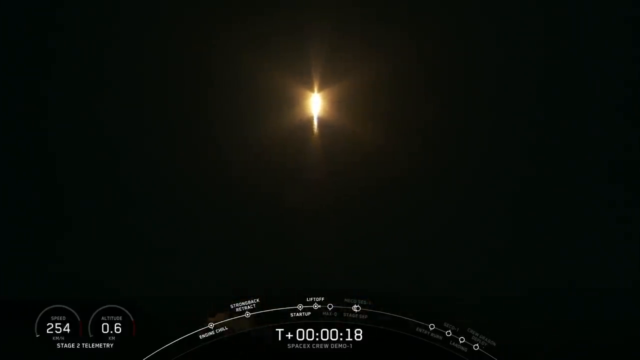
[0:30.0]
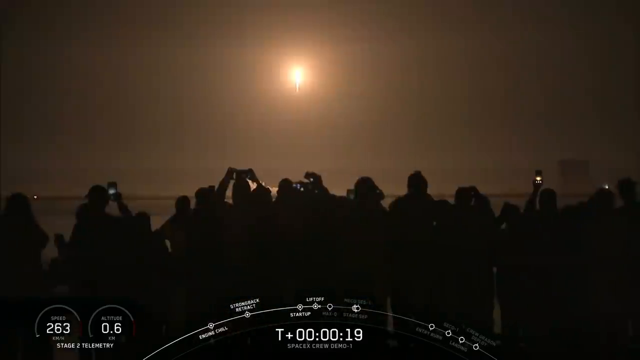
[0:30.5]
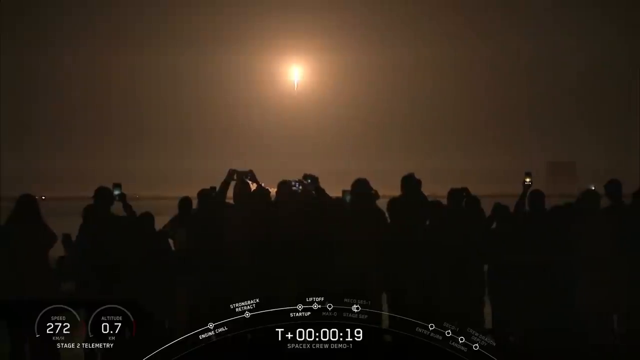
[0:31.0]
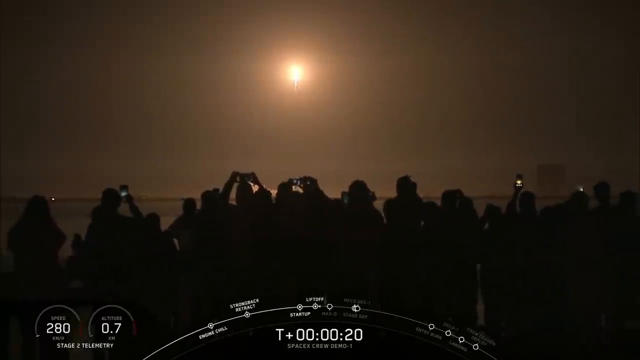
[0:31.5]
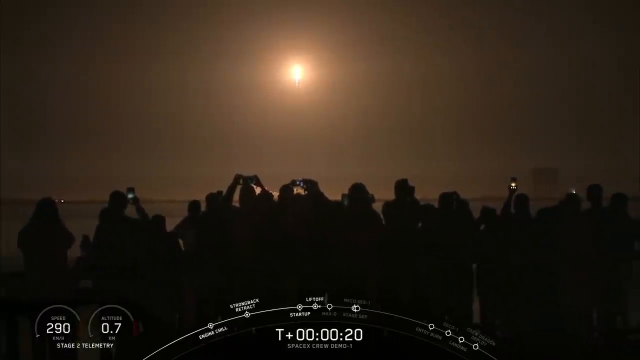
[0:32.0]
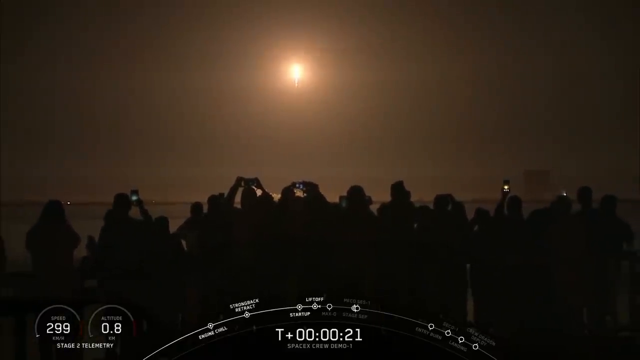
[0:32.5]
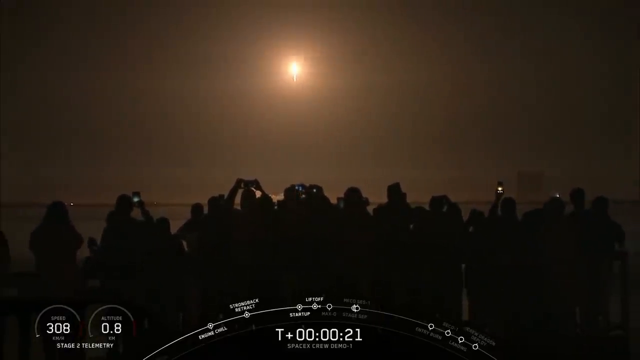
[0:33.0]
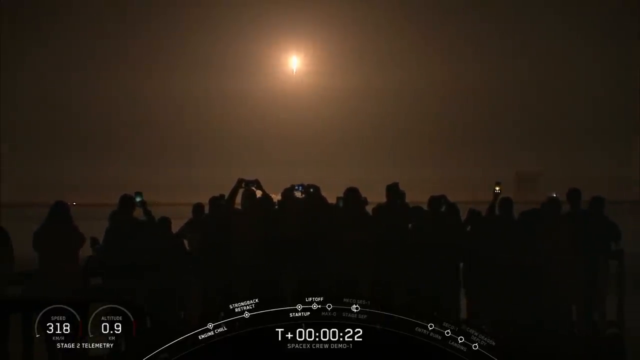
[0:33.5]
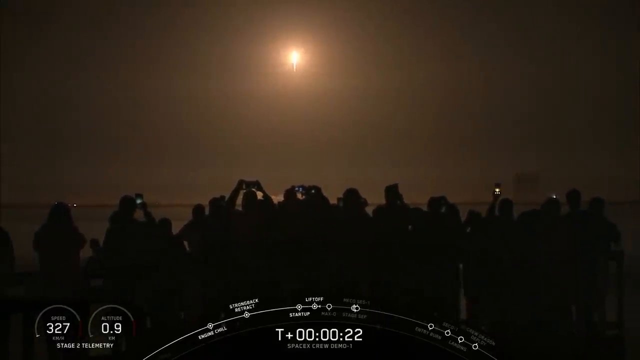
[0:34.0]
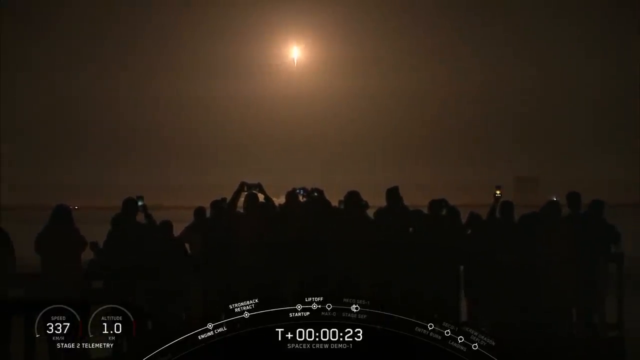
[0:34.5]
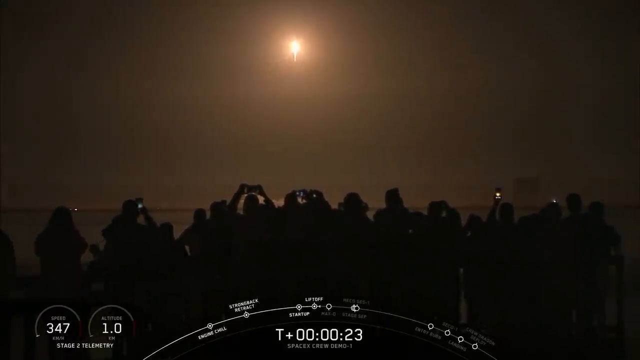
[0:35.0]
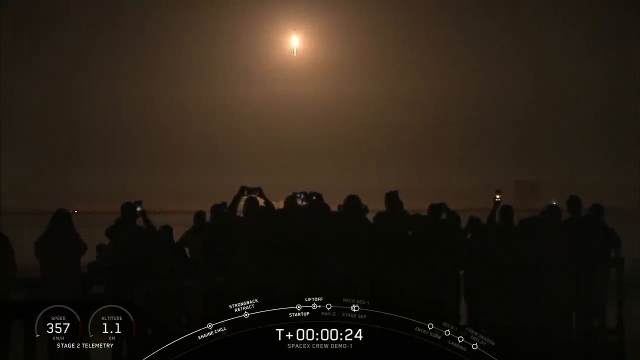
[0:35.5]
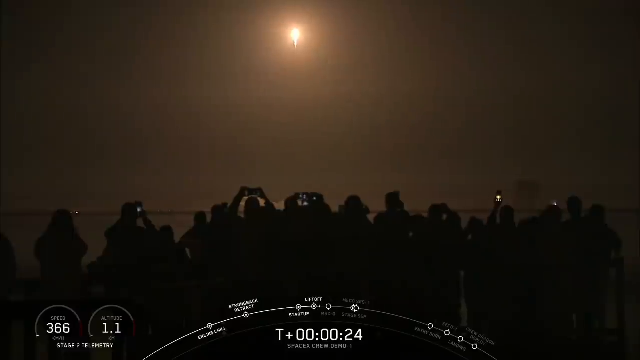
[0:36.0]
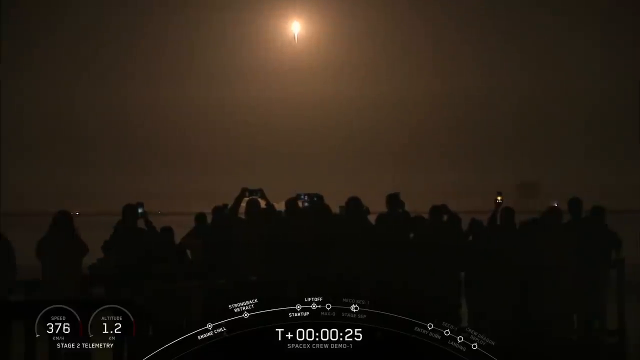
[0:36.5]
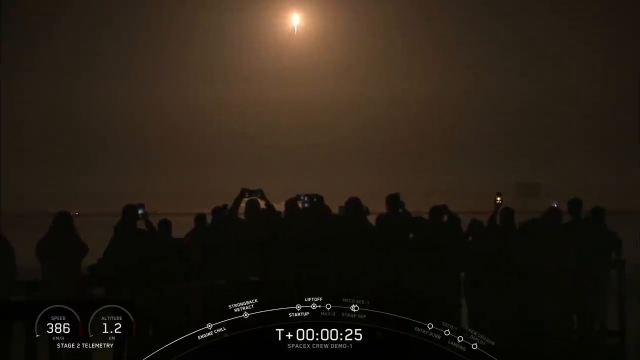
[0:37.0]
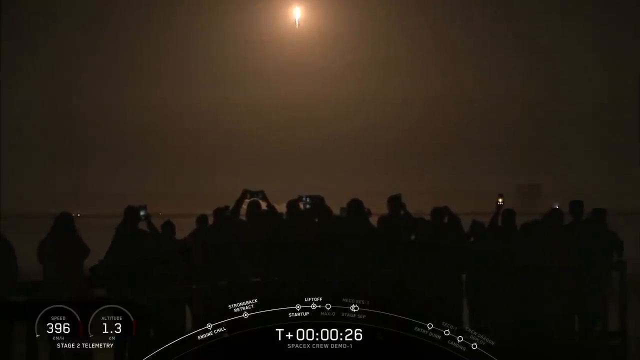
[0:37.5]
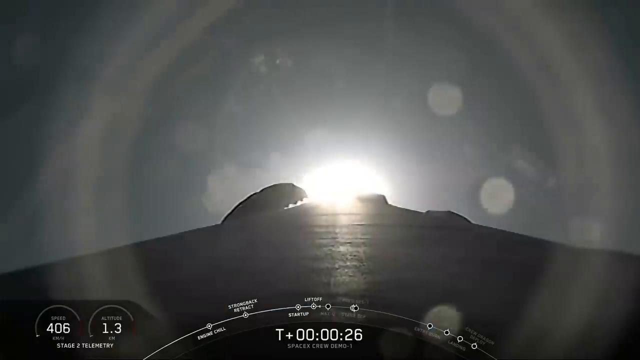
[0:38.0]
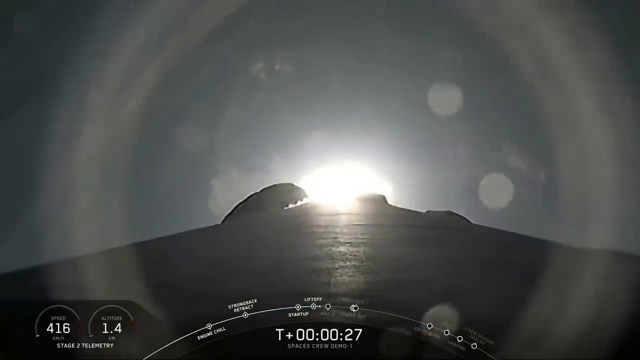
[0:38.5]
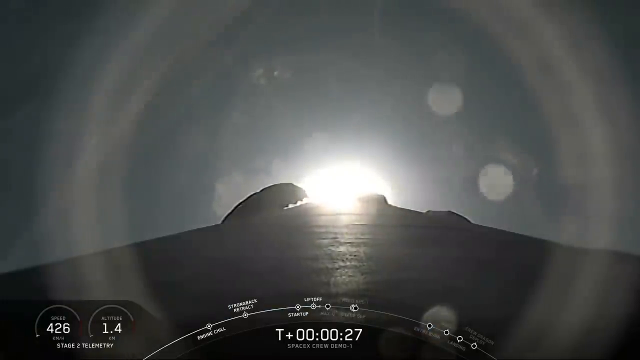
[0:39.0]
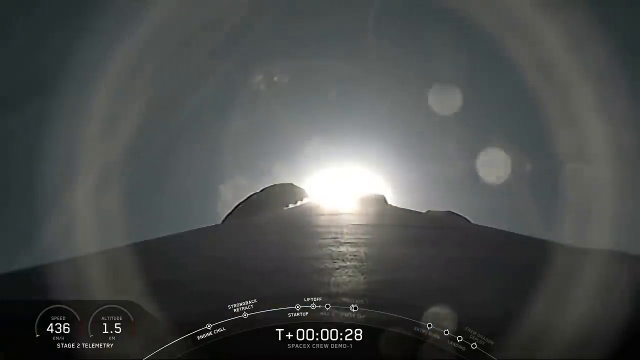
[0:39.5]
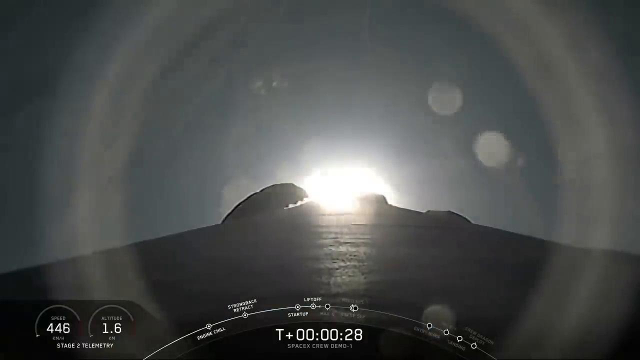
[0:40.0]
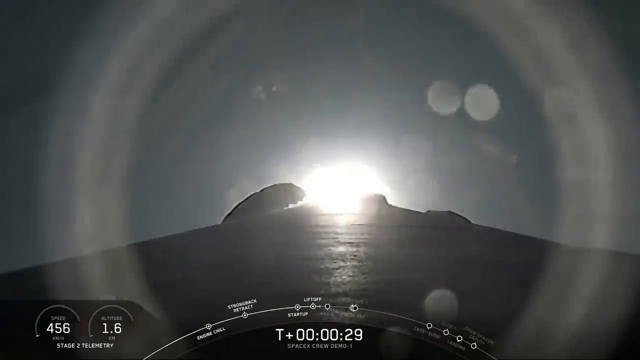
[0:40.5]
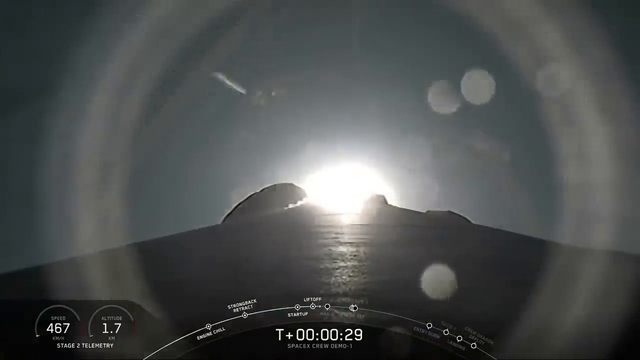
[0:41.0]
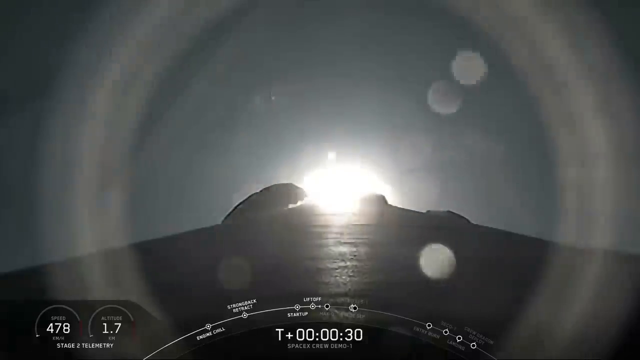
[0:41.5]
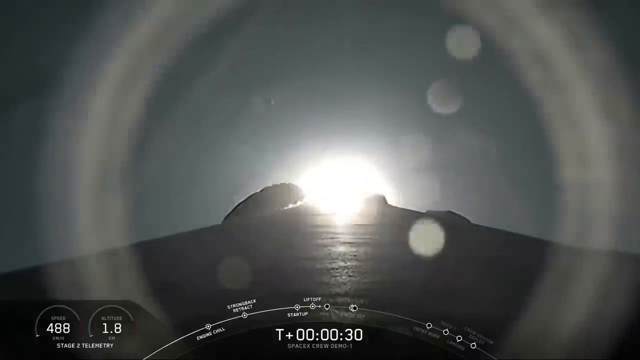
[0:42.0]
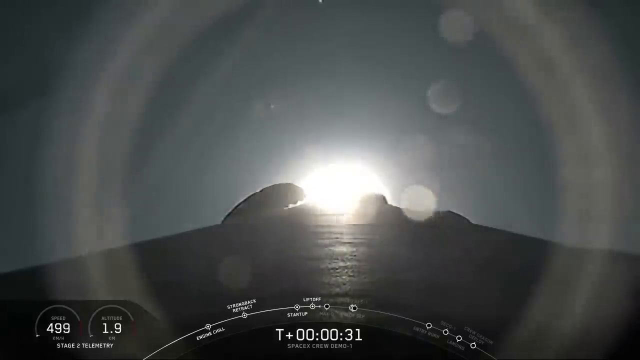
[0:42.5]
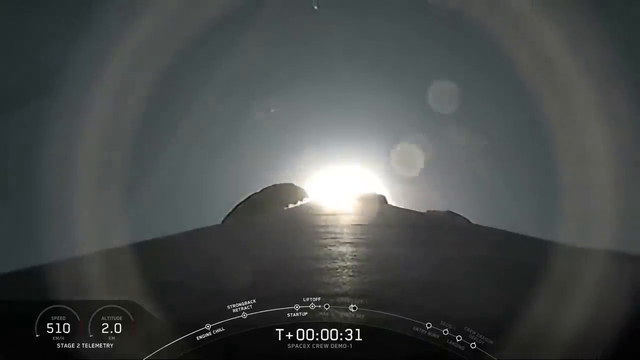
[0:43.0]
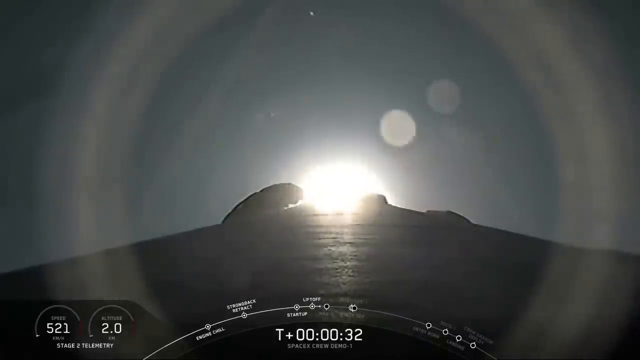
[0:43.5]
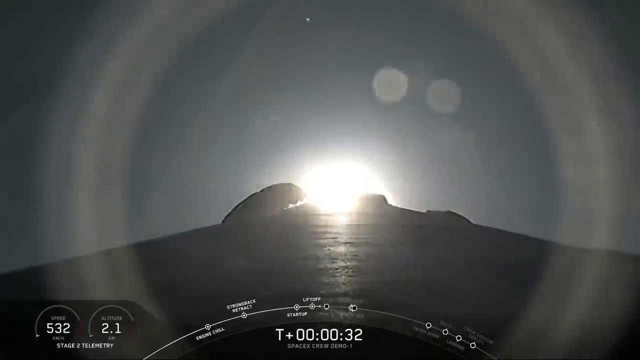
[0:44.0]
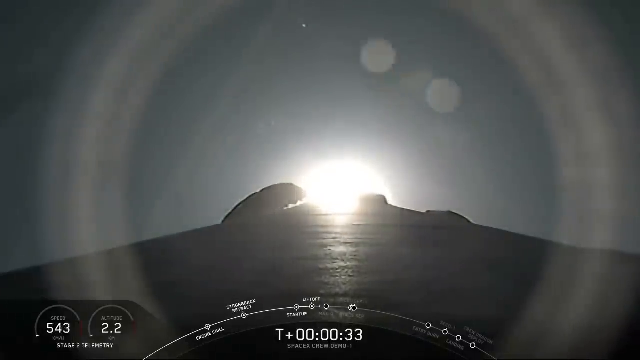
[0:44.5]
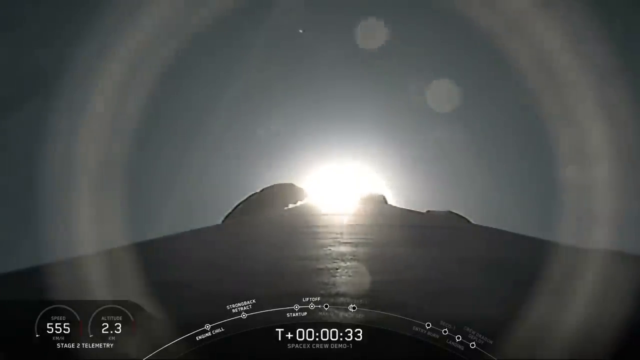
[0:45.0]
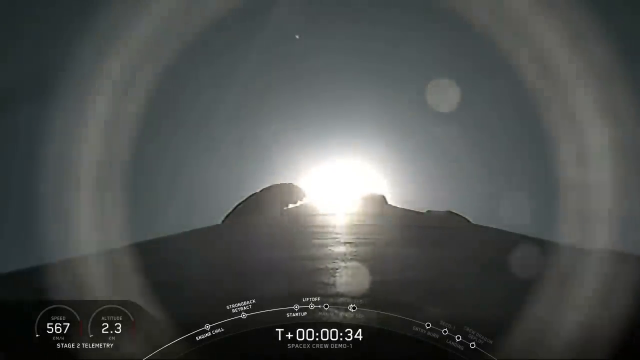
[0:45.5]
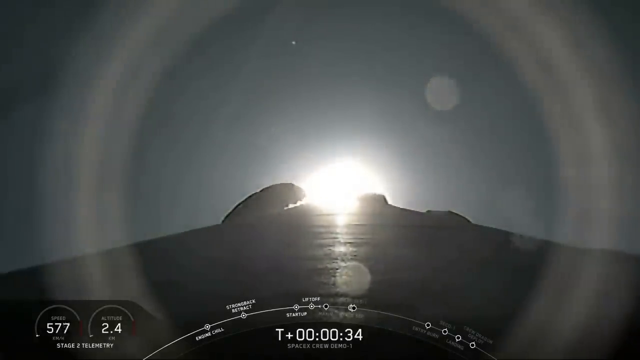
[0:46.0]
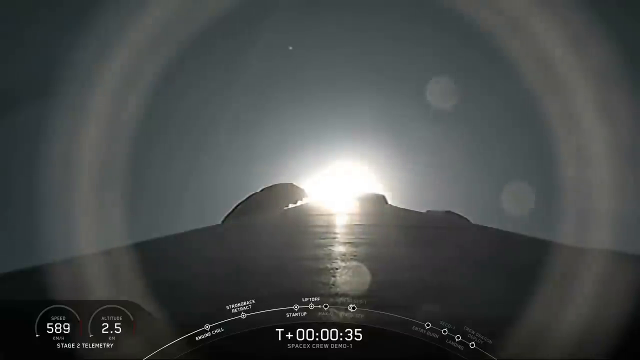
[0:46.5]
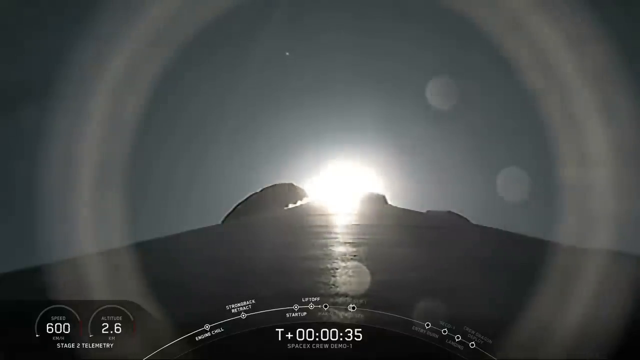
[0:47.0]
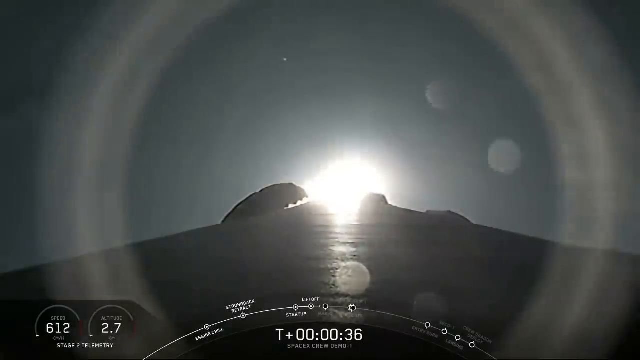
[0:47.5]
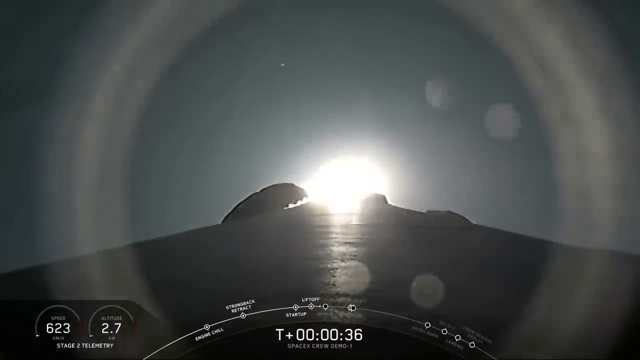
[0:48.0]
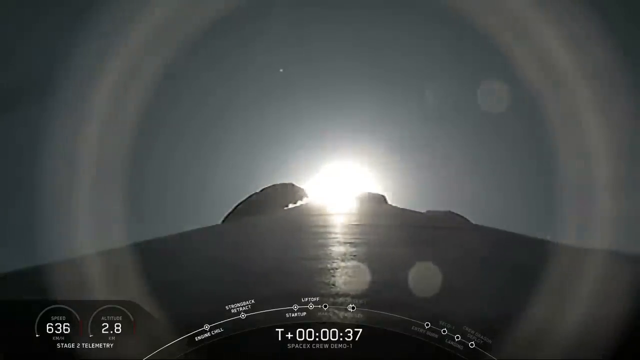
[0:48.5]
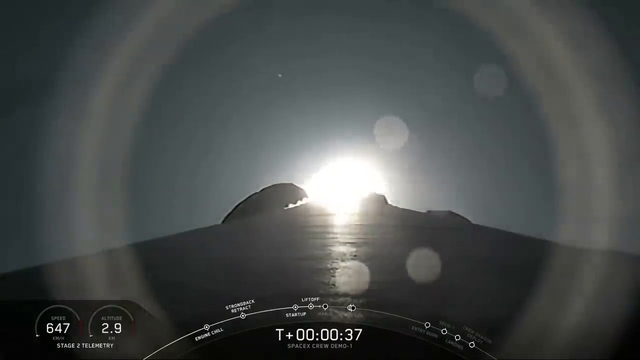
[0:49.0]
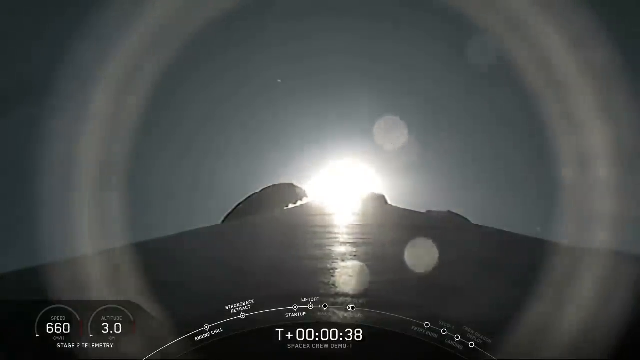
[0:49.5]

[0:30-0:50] The scene cuts to spectators across a body of water from the launch pad, seen from behind so that only their silhouettes are visible. Many of them hold their phones up, taking videos of the rocket as it ascends into the sky. The graphics remain at the bottom of the screen: the two speedometers on the left and the arc with the launch milestones in the bottom middle. A timer shows how long the rocket has been in the sky in seconds, and beneath it the text reads "SpaceX crew demo 1." The video then cuts to a camera affixed to the rocket itself, looking down towards Earth, with a fiery glow coming from the bottom of the rocket. The view is from the outside of the rocket, looking down.